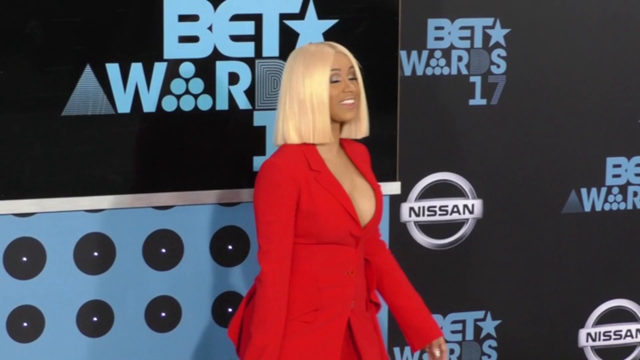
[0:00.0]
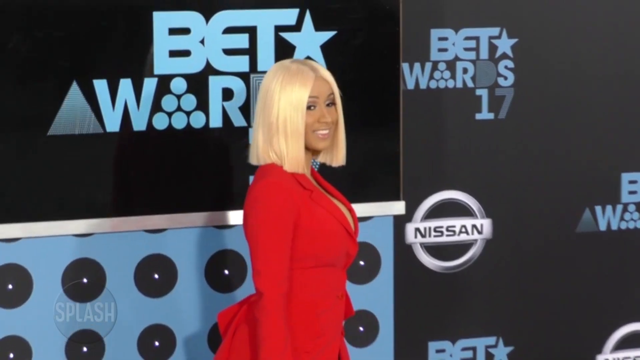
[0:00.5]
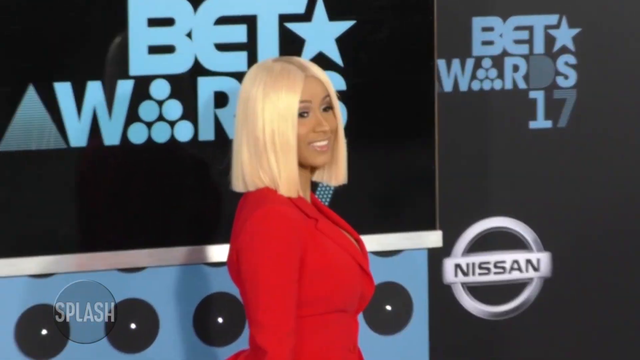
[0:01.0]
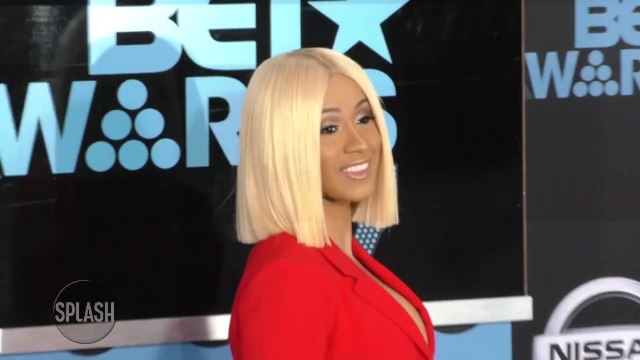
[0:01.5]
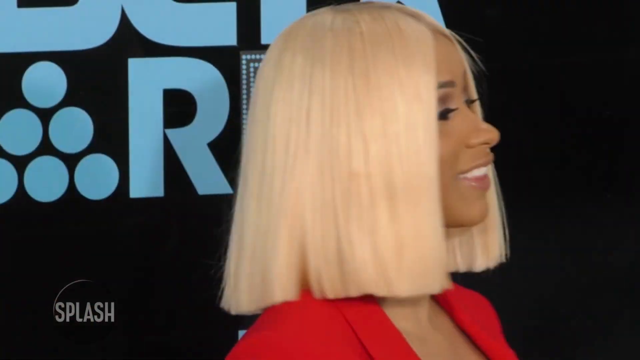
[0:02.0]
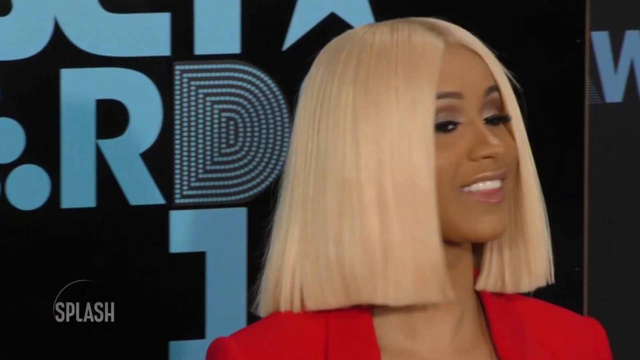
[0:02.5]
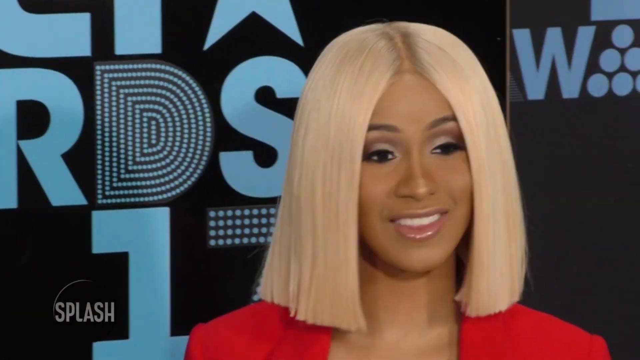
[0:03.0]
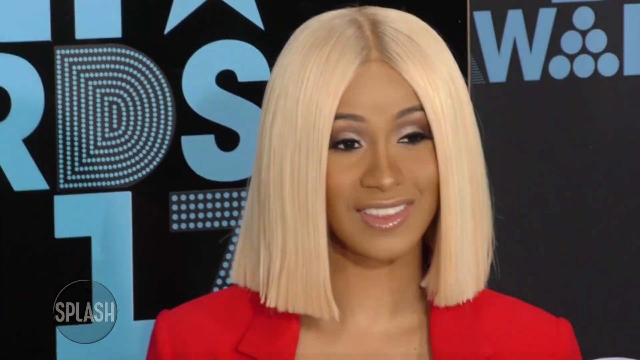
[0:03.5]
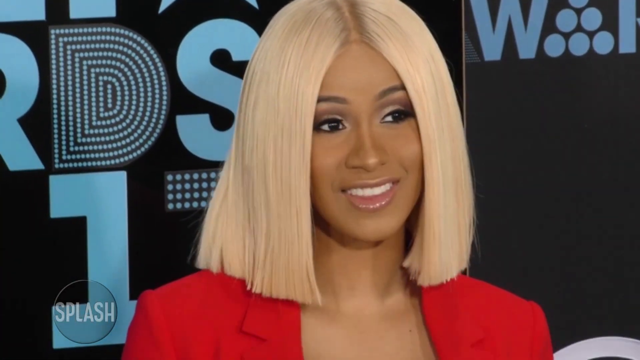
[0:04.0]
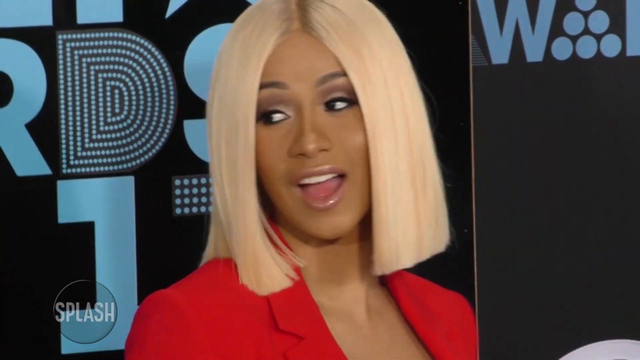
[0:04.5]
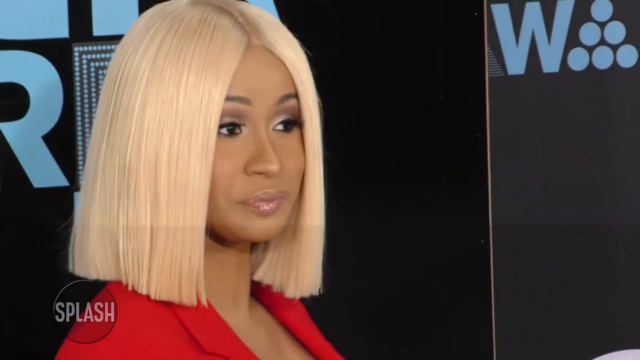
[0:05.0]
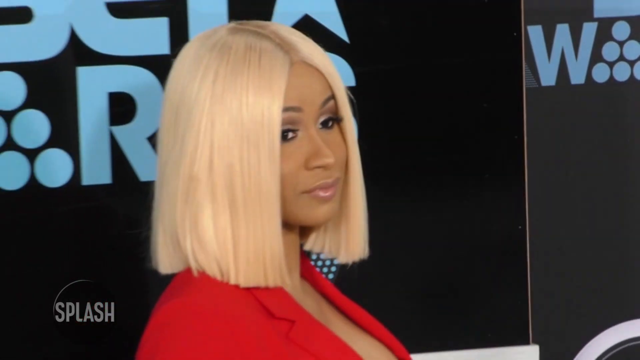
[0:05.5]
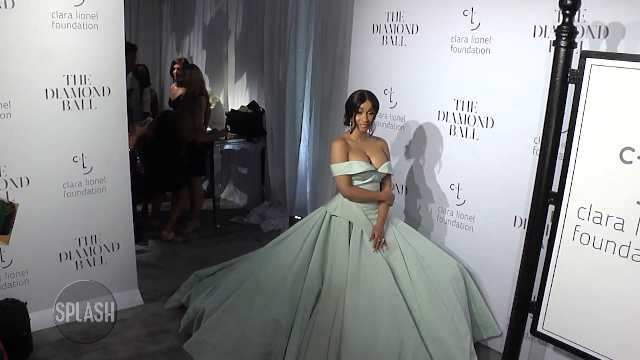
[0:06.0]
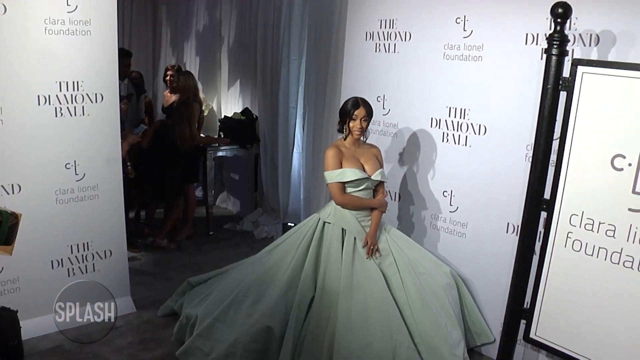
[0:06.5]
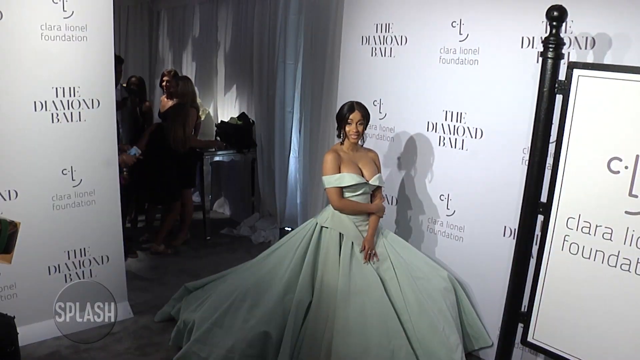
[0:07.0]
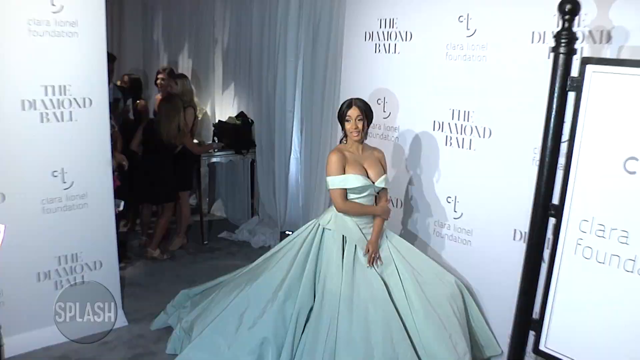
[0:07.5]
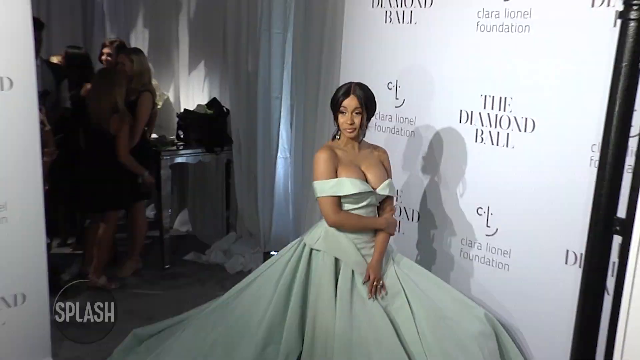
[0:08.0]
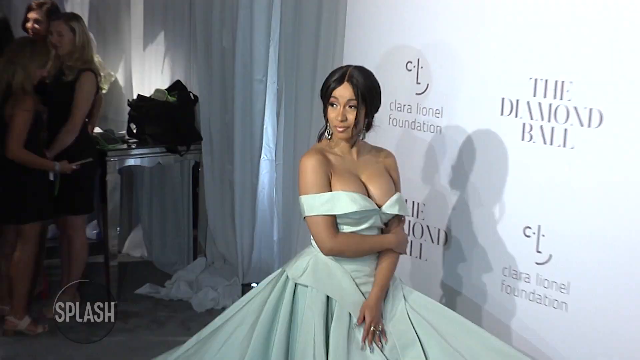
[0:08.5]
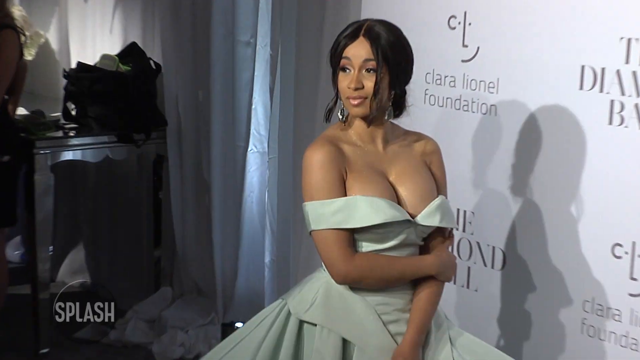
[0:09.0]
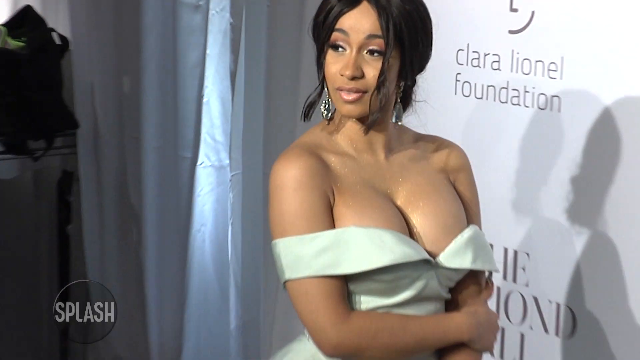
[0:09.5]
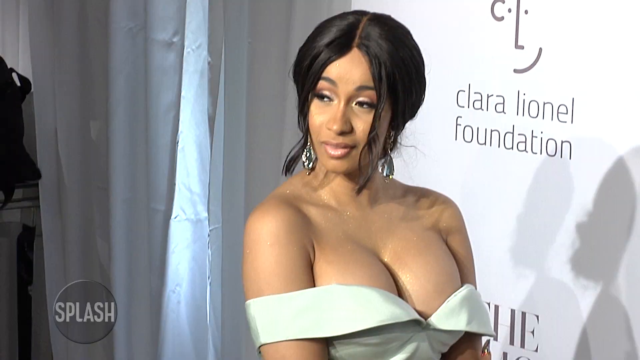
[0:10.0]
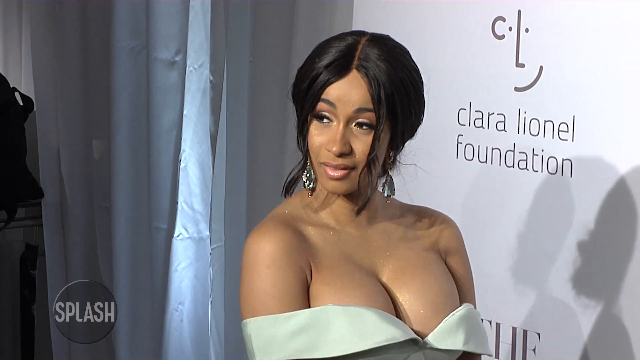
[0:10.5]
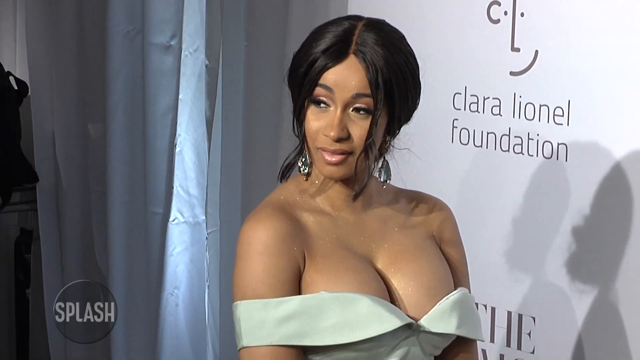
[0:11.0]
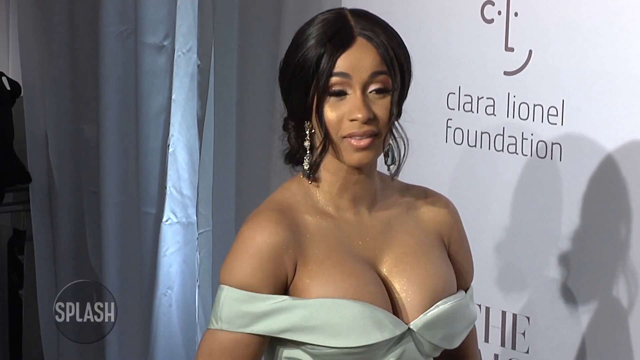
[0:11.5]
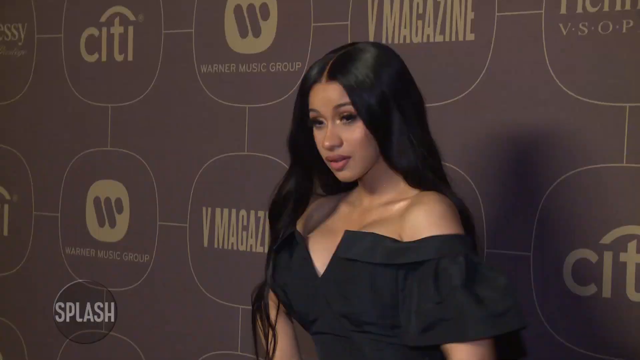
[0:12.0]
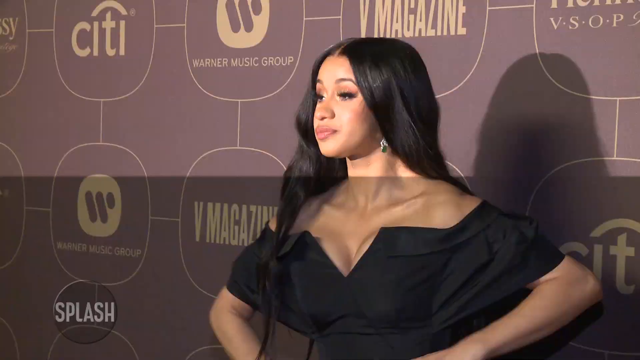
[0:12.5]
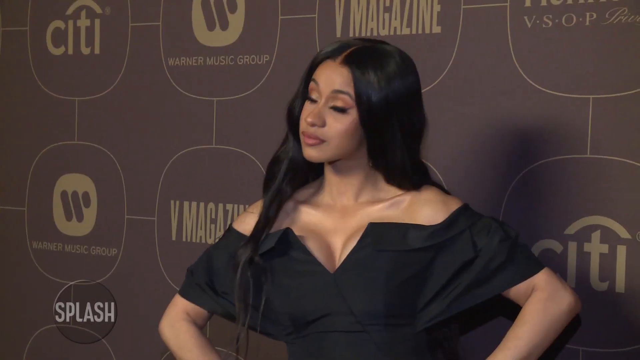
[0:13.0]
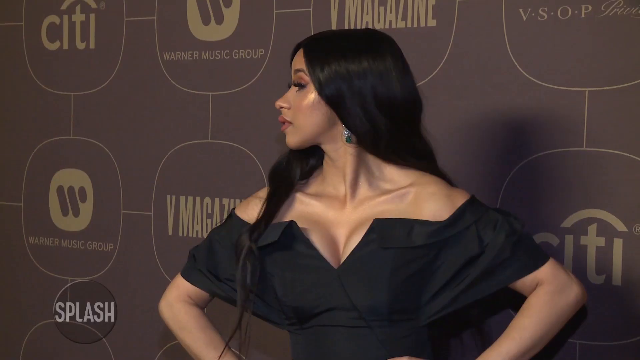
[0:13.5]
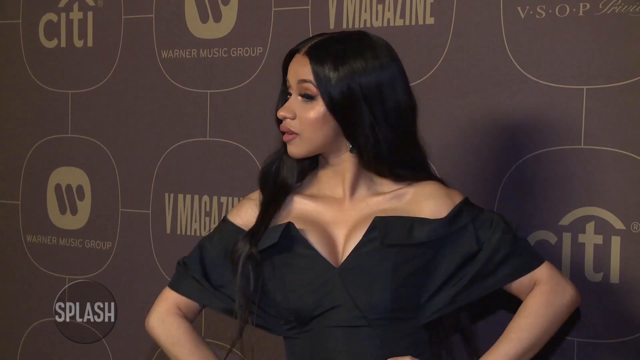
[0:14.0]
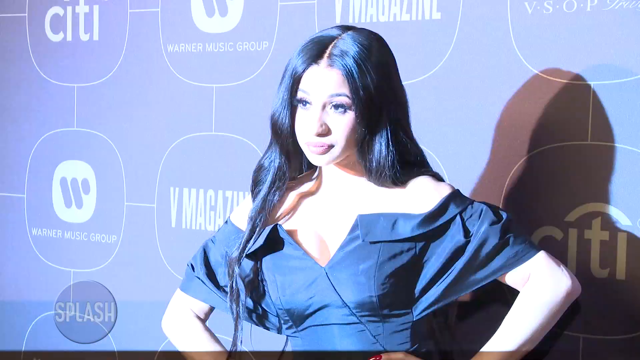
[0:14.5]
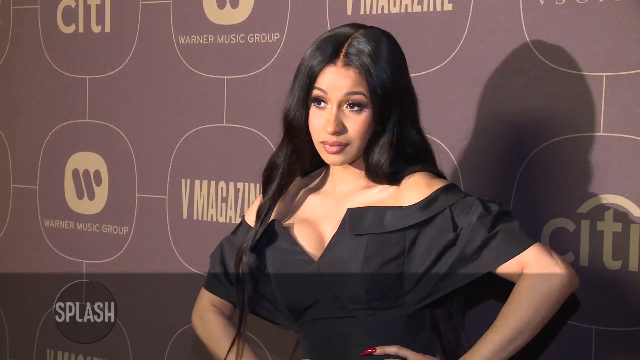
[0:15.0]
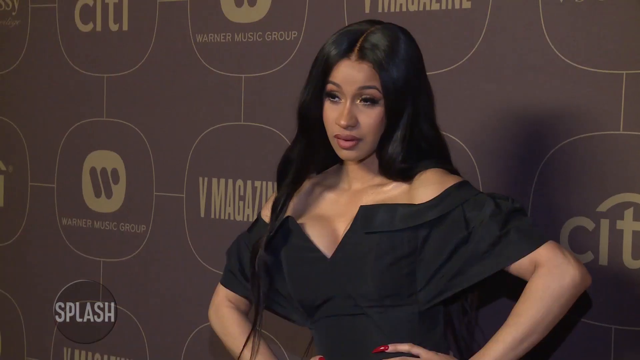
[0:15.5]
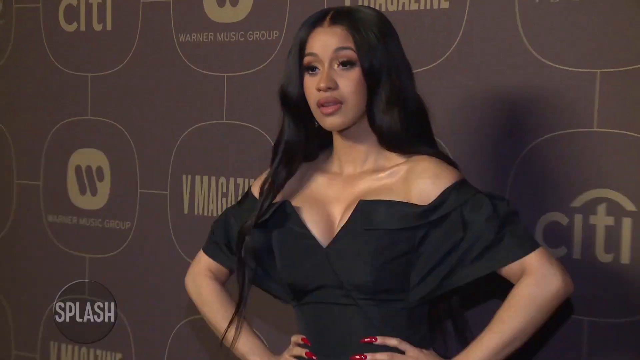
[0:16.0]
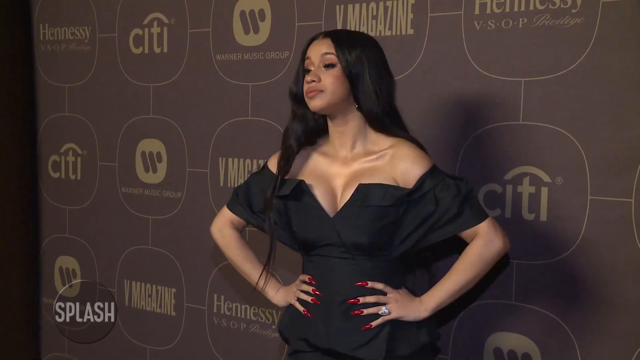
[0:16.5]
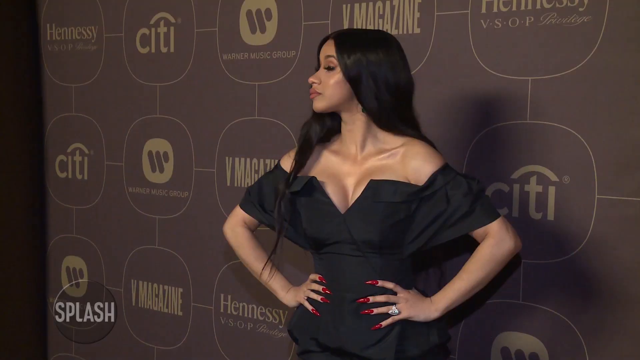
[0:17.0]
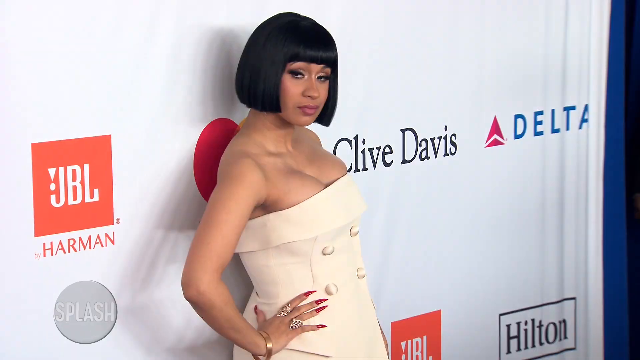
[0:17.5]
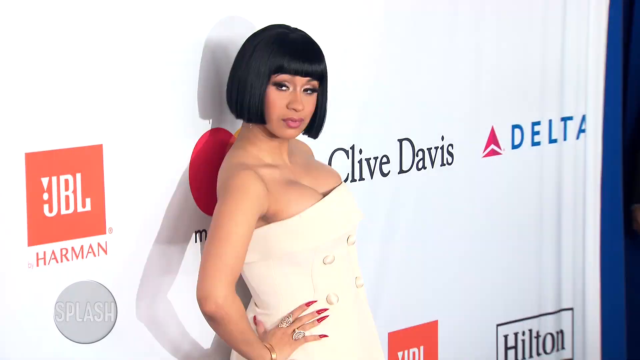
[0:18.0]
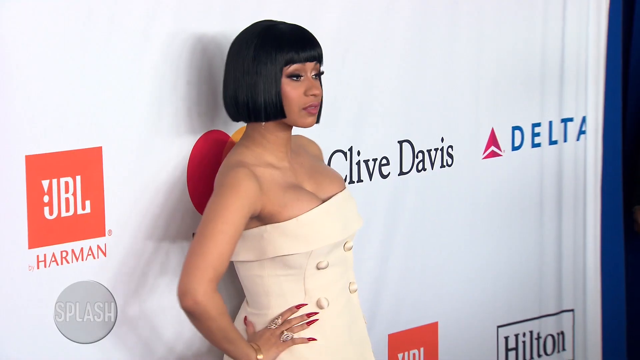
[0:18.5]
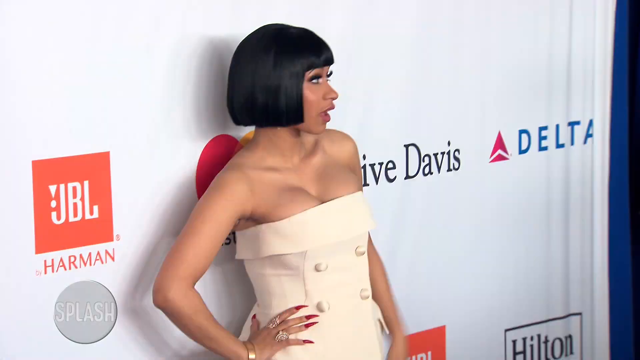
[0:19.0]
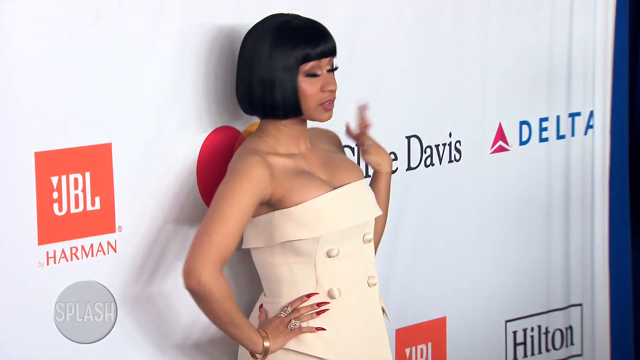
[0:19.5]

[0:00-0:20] Cardi B appears to be at an event, wearing a red suit and a short blonde bob wig. In the background there is text reading "BET Awards 2017" and a Nissan logo is visible. She poses for the cameras as many light flashes go off. She wears makeup, with smokey eye shadow and long eyelashes. Next, Cardi B is at an event that looks like the Diamond Bowl; logos on the wall read "the Diamond Bowl", and another logo on the wall reads "Clara Lionel Foundation". Her black hair is tied at the back, and she wears a long green dress. She is then shown at another event with logos for V magazine, Warner Music Group and Citi behind her; she wears a black dress and has long black hair. Another shot shows her in a short bob wig and a cream dress, with logos for Harman, Clive Davis and Delta behind her.